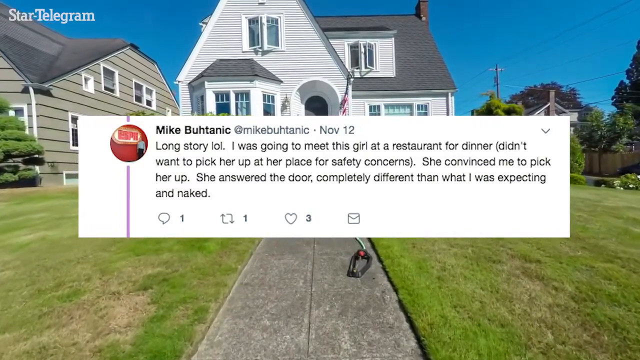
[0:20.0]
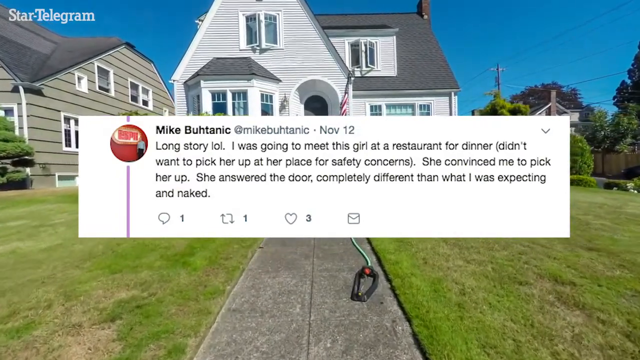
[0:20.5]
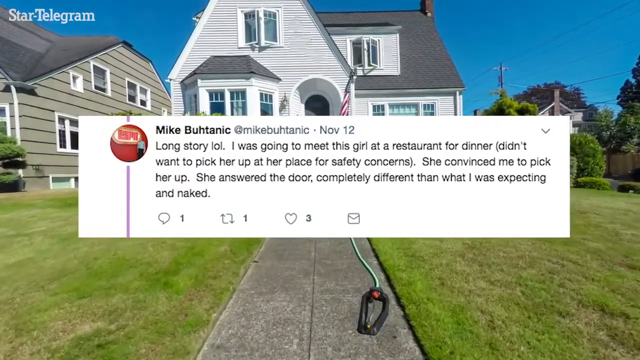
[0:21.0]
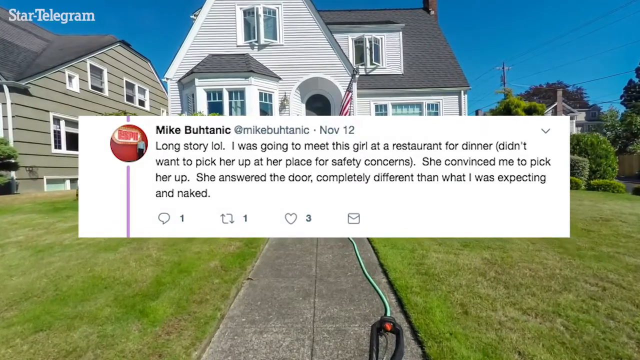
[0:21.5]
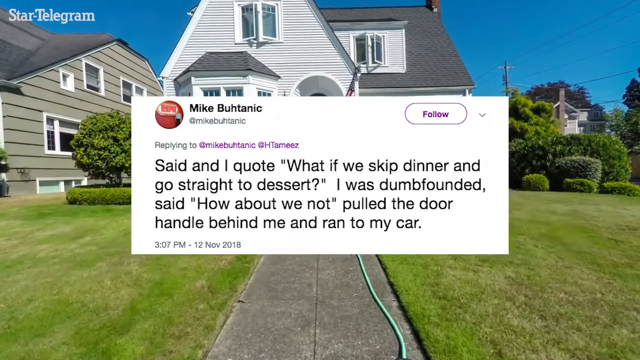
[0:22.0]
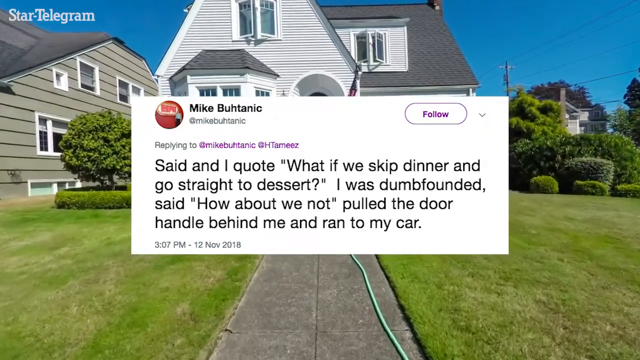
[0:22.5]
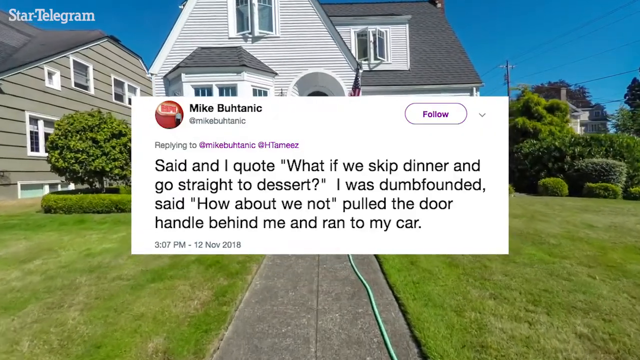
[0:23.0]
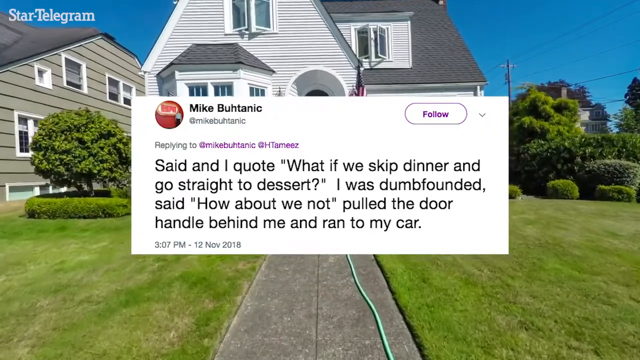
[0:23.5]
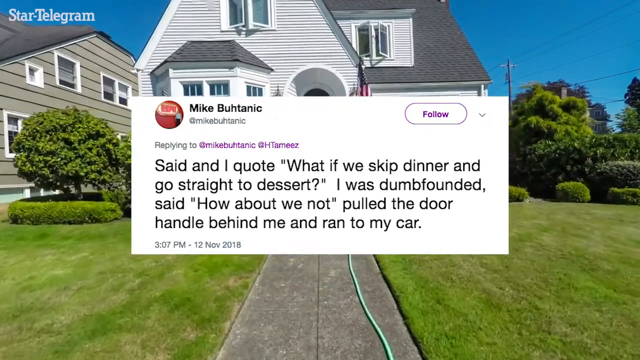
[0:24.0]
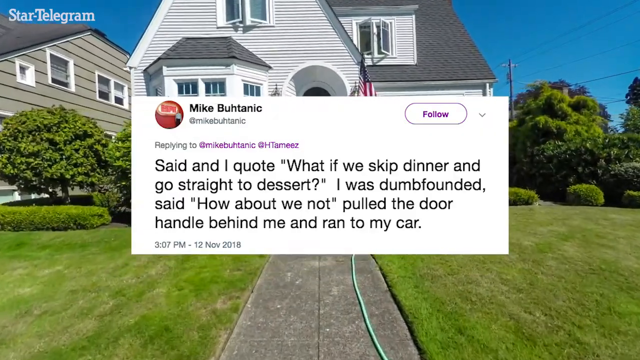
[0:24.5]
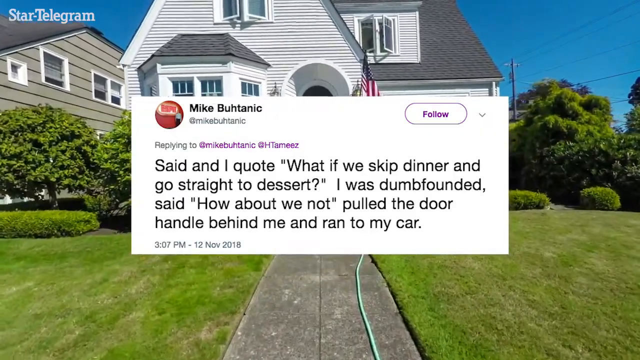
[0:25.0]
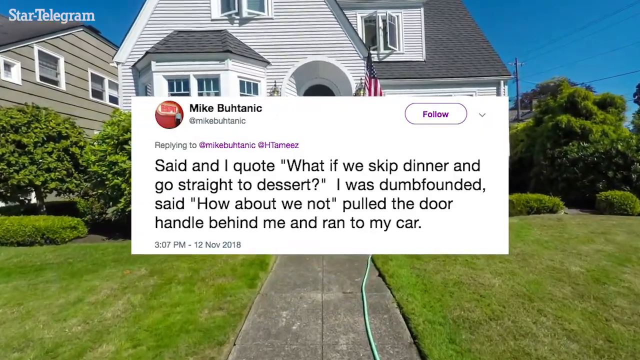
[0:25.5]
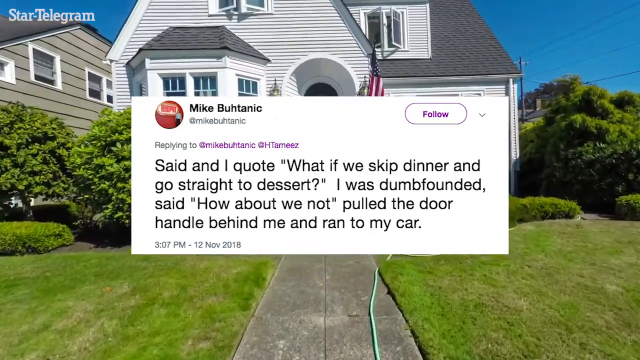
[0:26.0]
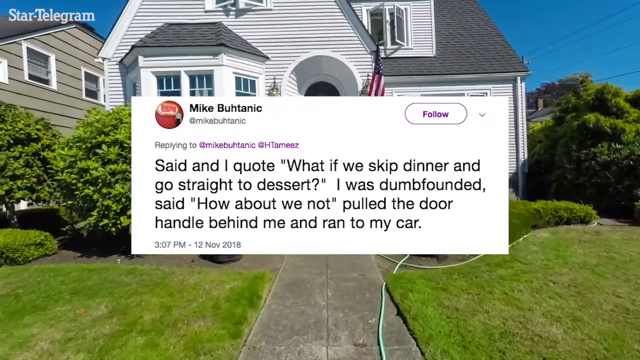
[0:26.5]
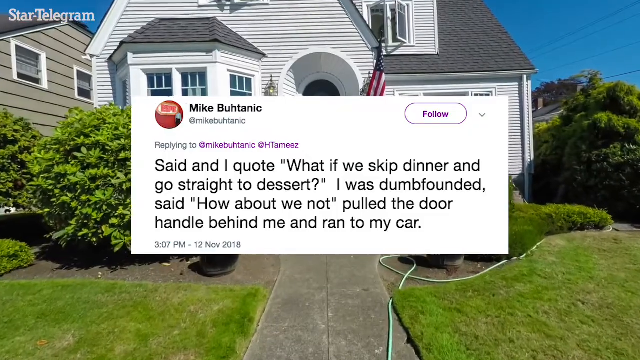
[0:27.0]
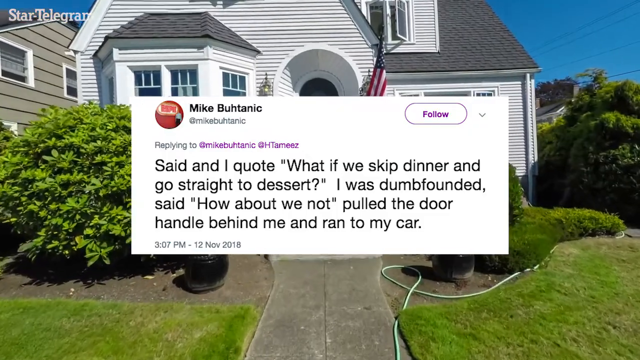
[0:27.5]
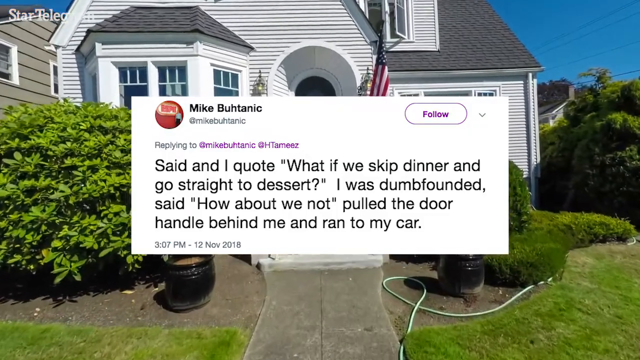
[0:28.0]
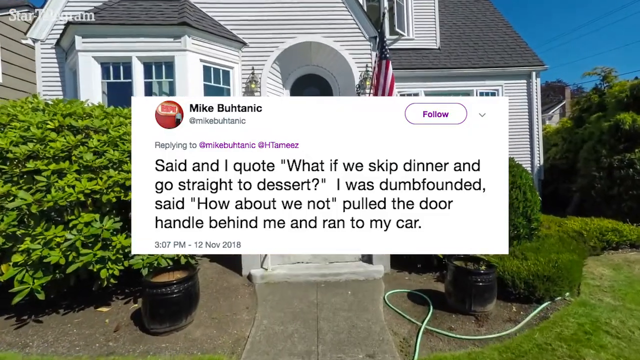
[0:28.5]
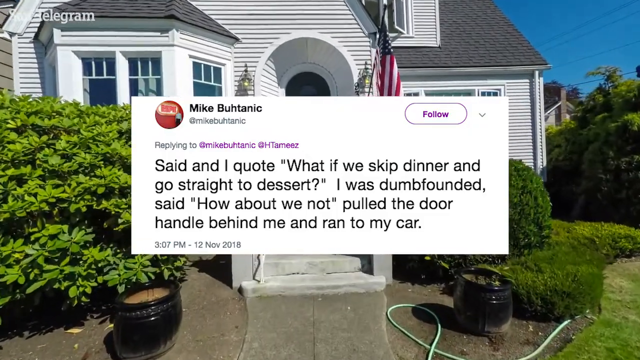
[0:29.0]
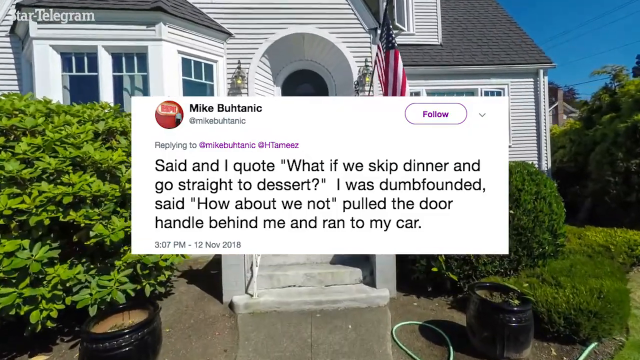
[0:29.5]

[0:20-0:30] Two buildings are shown, an ash-colored one with a black roof and a white one with a black roof, with trees around them. The ash building has one tree in front of it, and the white building has about three trees beside it. On-screen text reads "Long story, I was going to meet this girl at a restaurant for dinner. Didn't want to pick her up at her place for safety concerns. She convinced me to pick her up. She answered the door completely different than what I was expecting and naked." The camera moves toward the white building. More text appears, including "what if we skip dinner and go straight to dessert? I was dumbfounded." and "how about we not.", followed by a line about pulling the door handle and running back to the car.